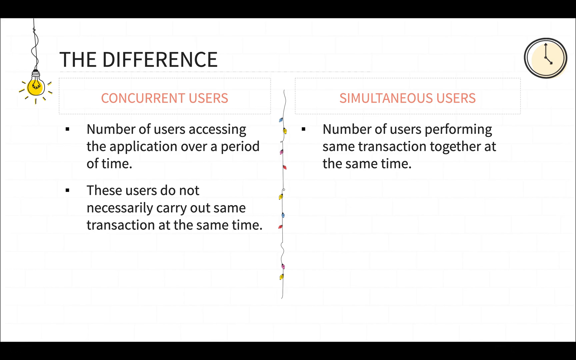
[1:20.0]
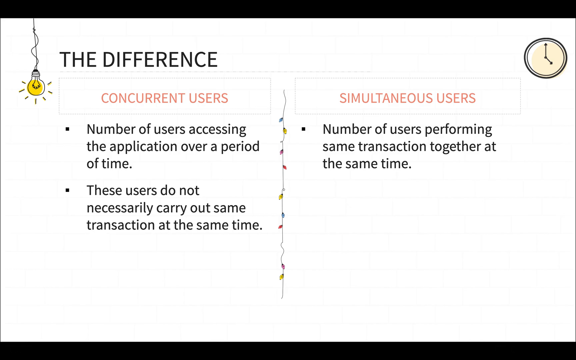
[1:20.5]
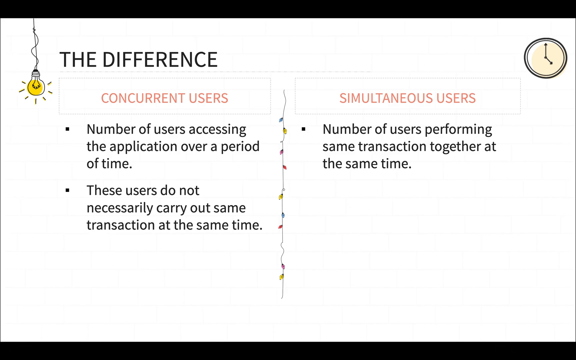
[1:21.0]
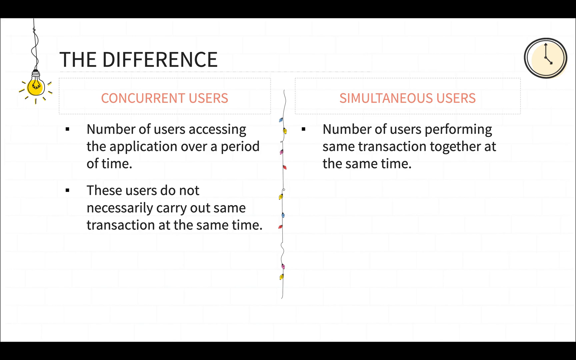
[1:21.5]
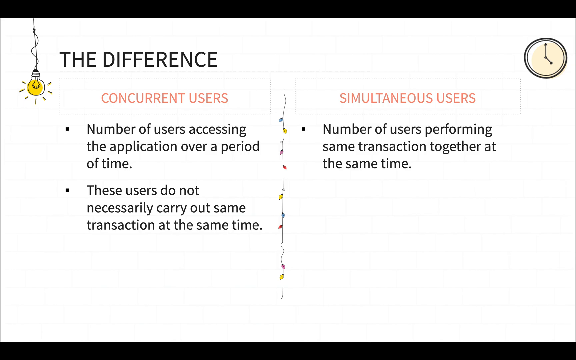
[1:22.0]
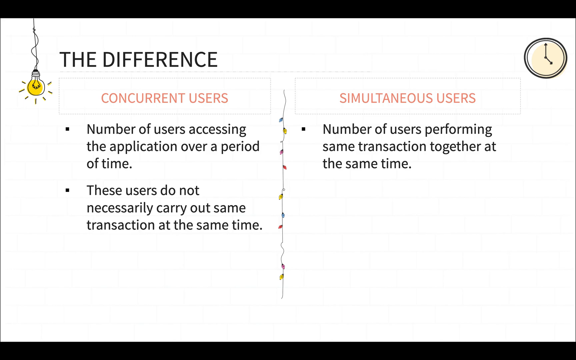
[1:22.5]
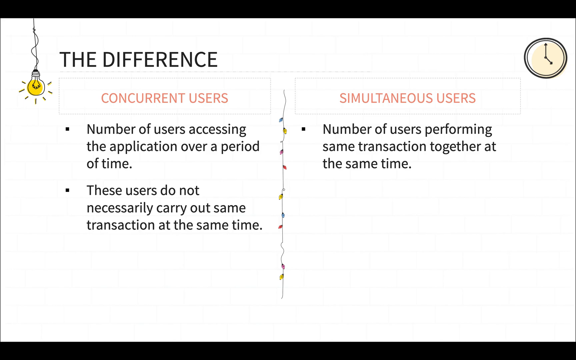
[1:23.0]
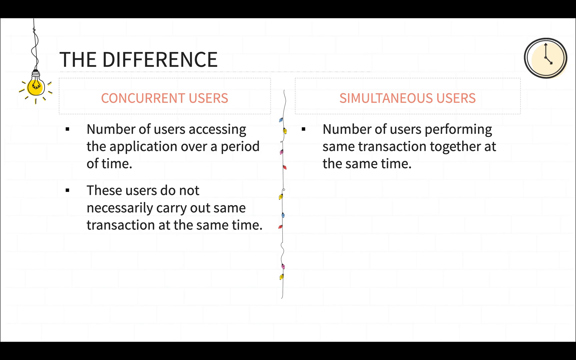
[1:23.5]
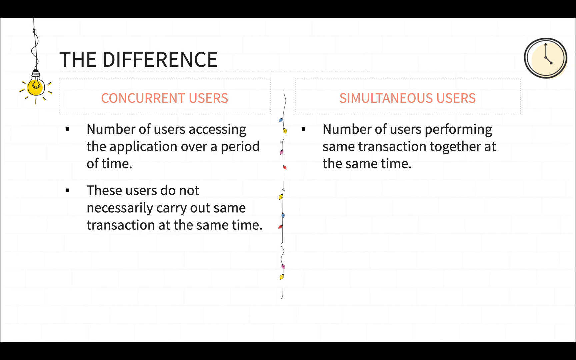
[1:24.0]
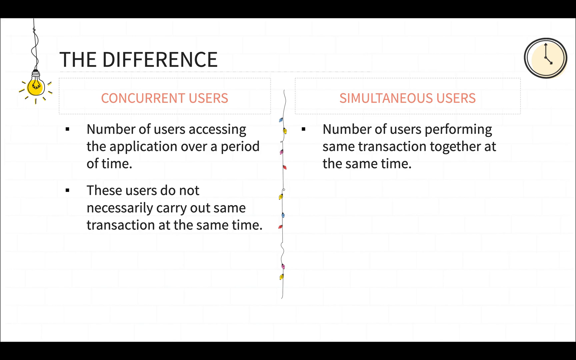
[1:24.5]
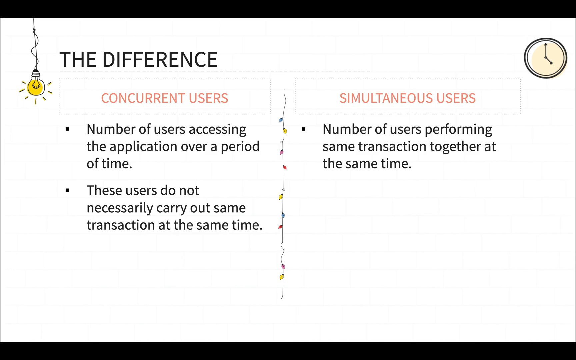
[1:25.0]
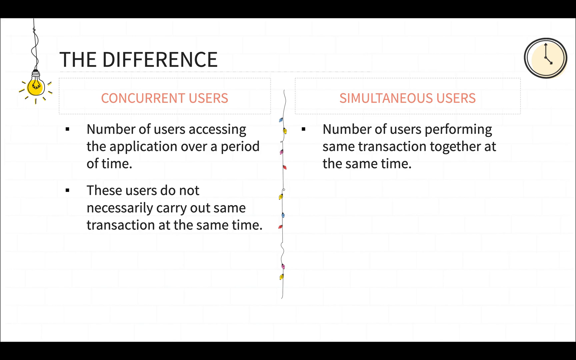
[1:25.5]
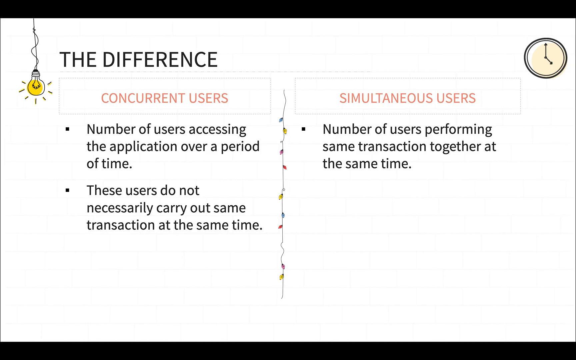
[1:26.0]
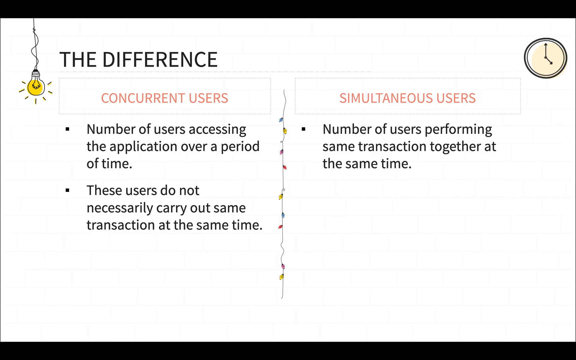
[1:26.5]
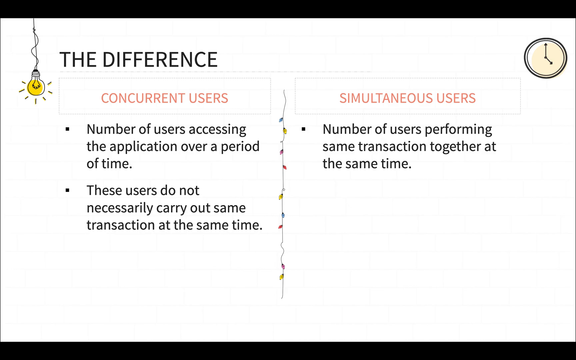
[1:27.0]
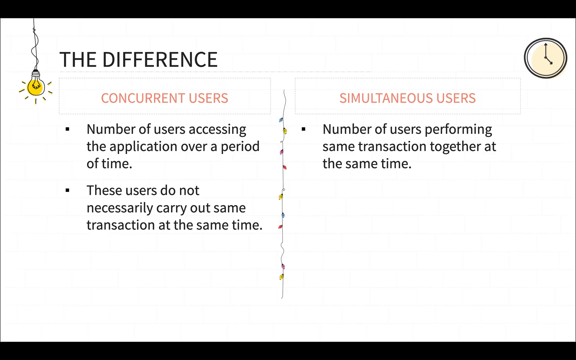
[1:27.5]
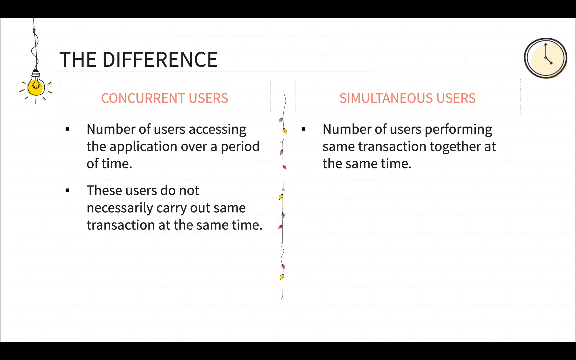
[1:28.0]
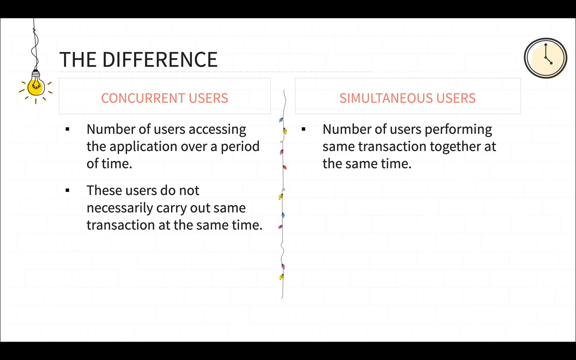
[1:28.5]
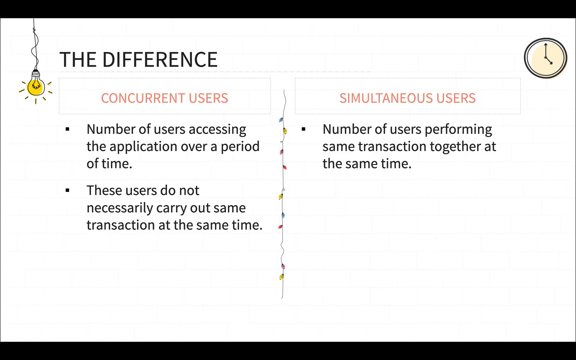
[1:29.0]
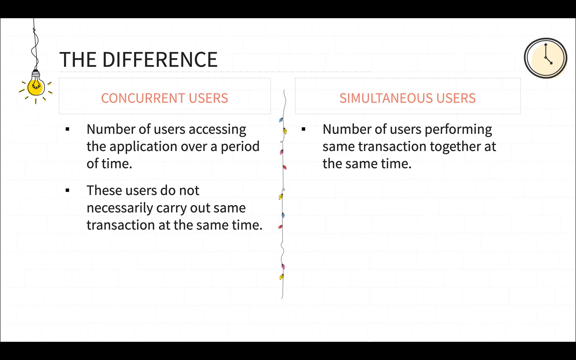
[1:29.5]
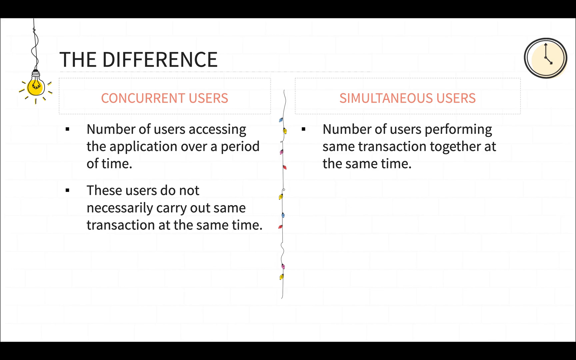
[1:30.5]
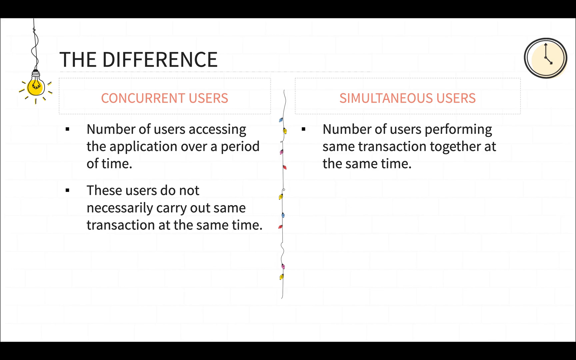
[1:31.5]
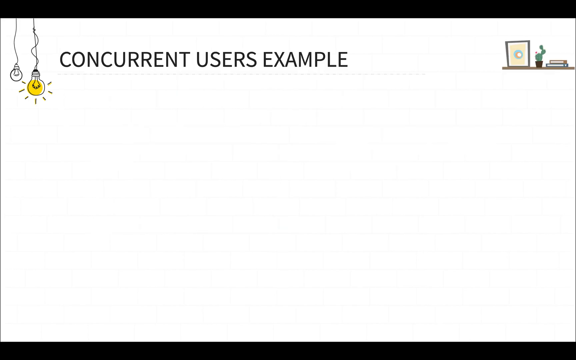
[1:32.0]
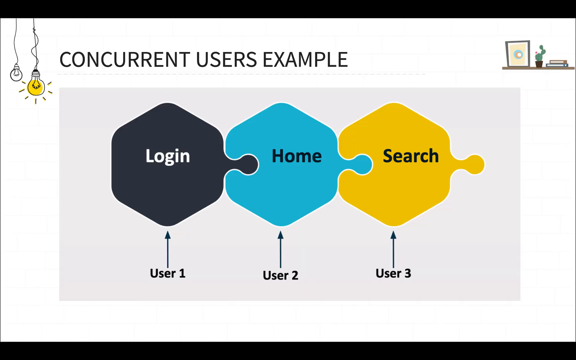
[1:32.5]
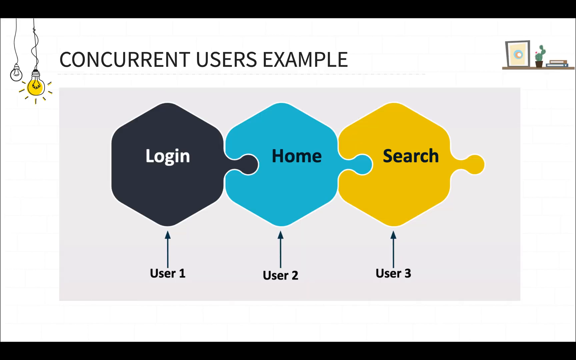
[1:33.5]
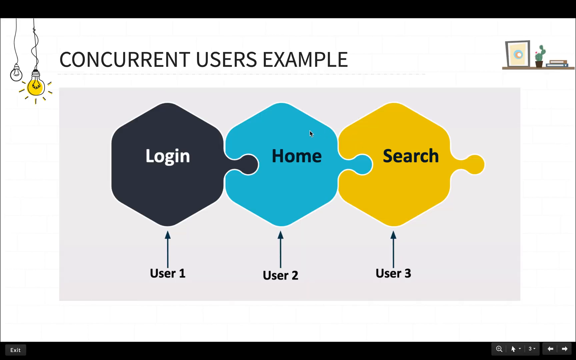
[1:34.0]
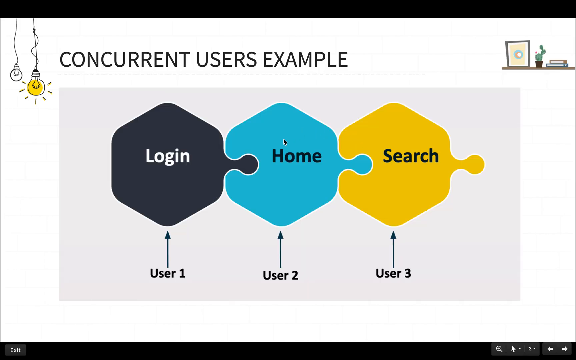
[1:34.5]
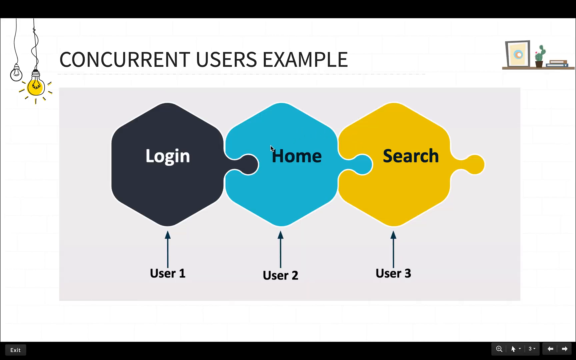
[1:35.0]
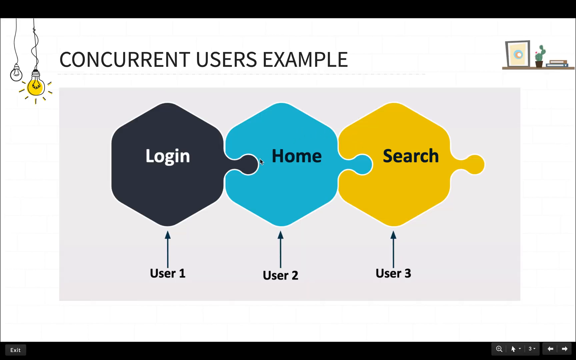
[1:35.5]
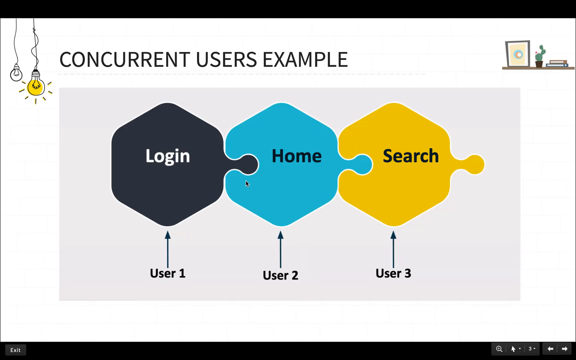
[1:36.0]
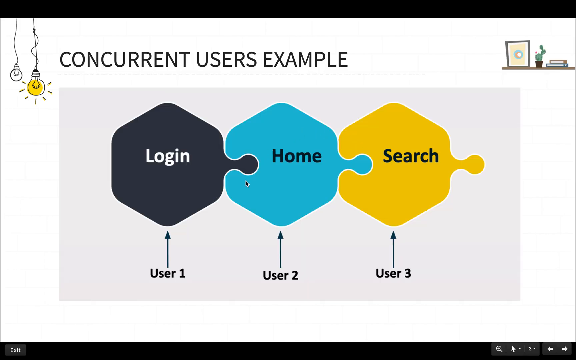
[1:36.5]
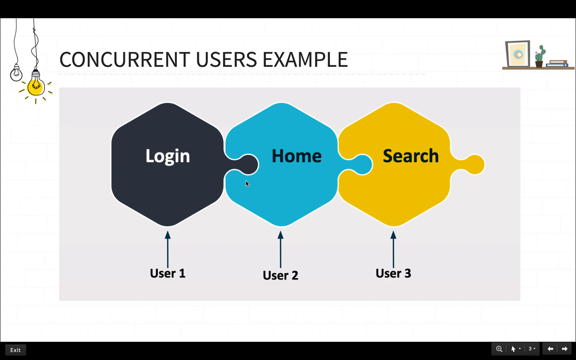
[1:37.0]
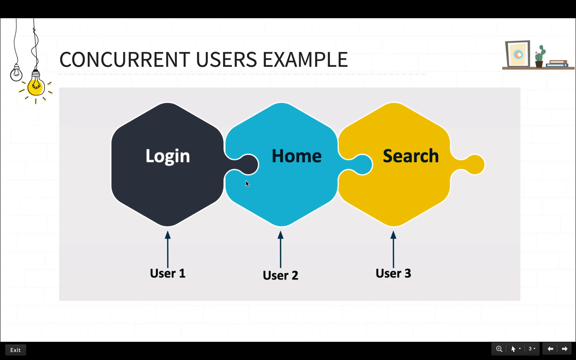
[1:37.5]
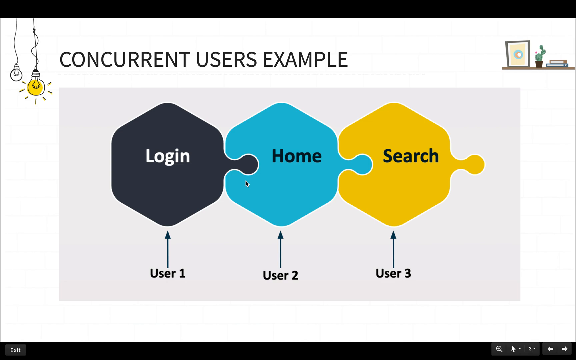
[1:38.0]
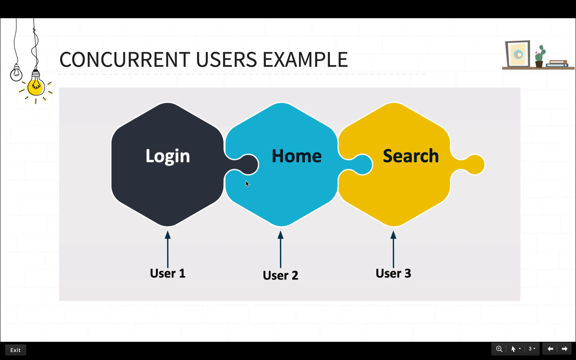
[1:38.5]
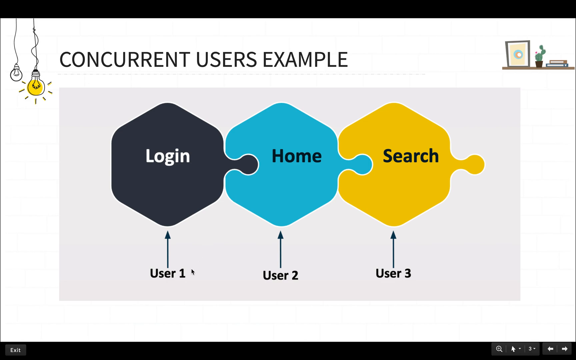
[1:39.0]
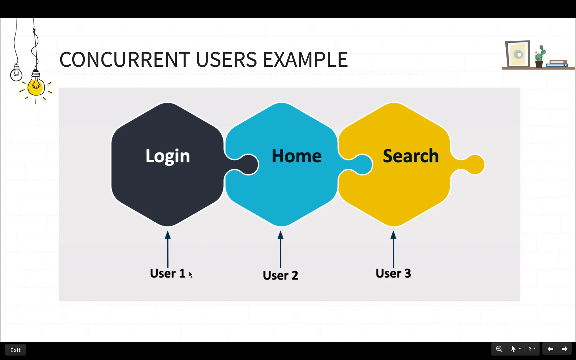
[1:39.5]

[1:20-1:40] A white slide reads "concurrent users, number of users accessing the application over a period of time" and "these users do not necessarily carry out the same transaction at the same time." A string of ivy with different colored leaves separates it from "simultaneous users, number of users performing same transaction together at same time." Then a new slide appears, titled "concurrent users example." It has two light bulbs: a smaller, unlit one on the left, and a bigger yellow one with rays coming out of it, its cord kind of wrapped around what it hangs on. The slide shows what look like puzzle pieces: user one, "login," in dark blue-black with white letters; "home," user two, fitting into it; and user three, "search," in yellow. In the corner there appear to be some books on a shelf and maybe a cactus, though it is hard to tell. A cursor kind of floats around the word "home," then moves over to user one and stops.